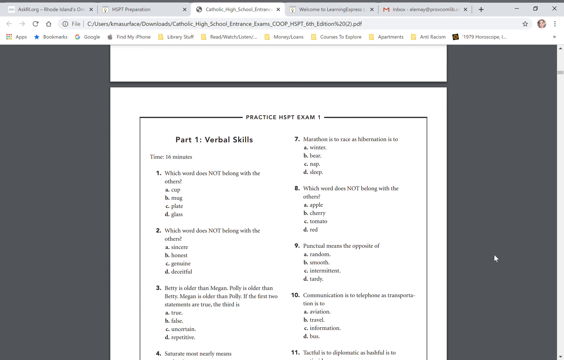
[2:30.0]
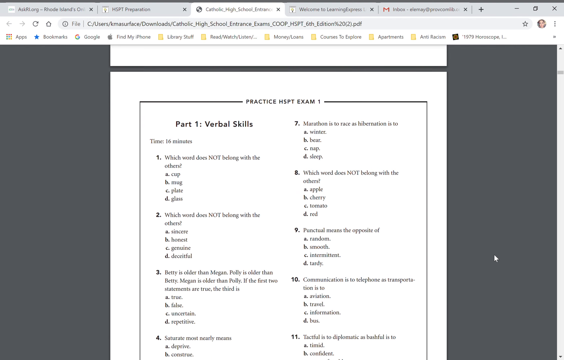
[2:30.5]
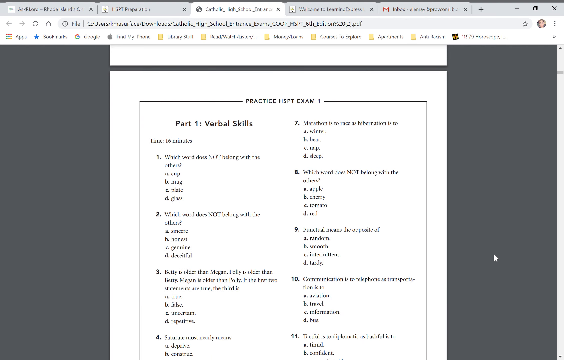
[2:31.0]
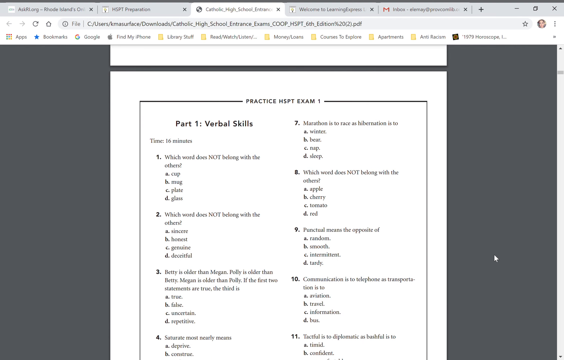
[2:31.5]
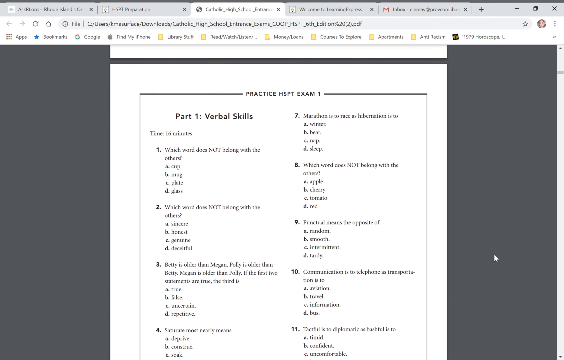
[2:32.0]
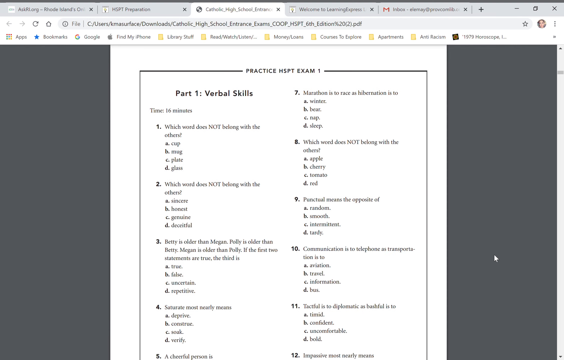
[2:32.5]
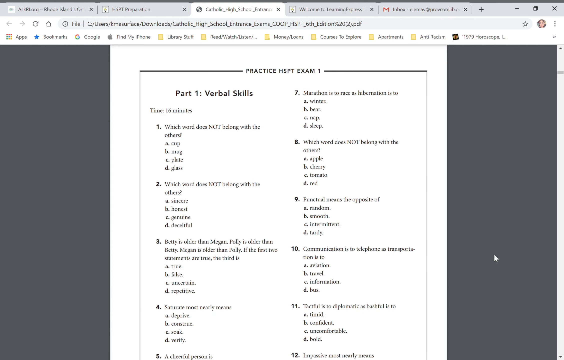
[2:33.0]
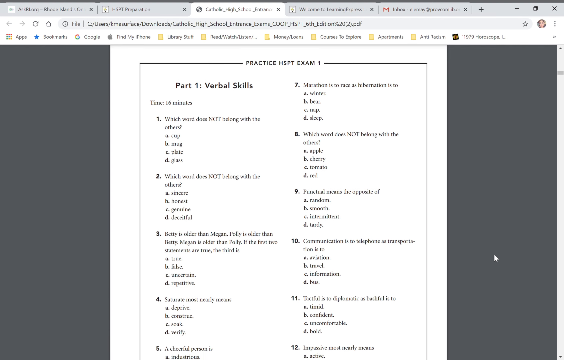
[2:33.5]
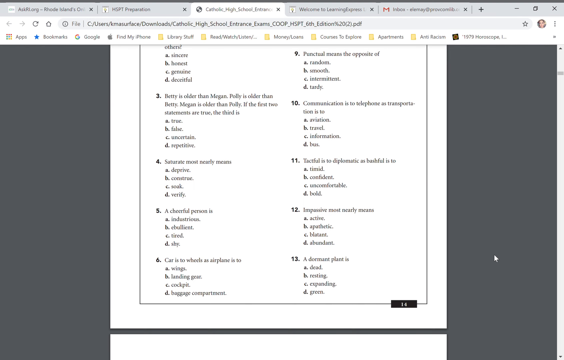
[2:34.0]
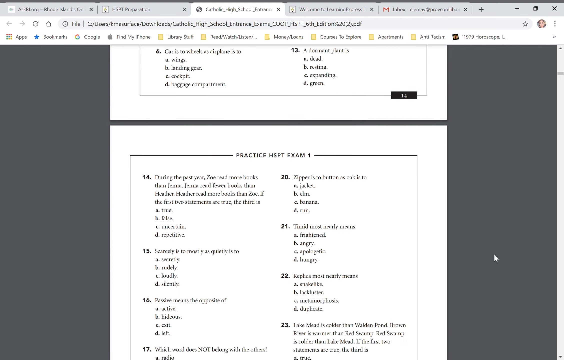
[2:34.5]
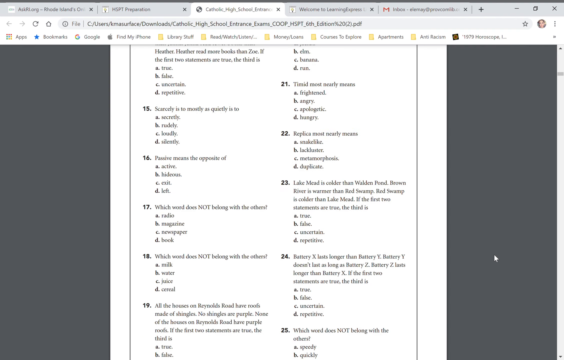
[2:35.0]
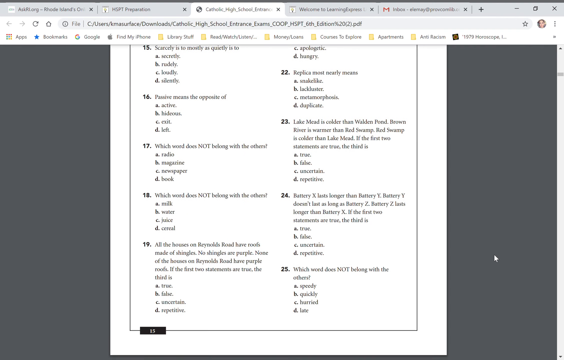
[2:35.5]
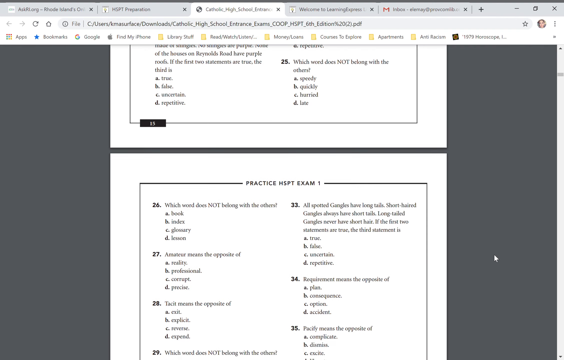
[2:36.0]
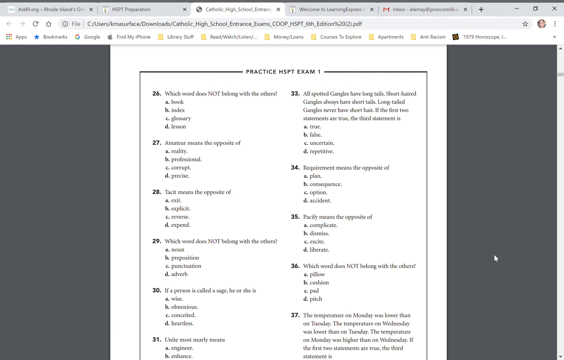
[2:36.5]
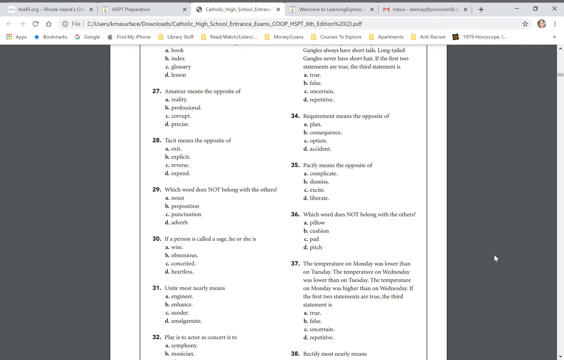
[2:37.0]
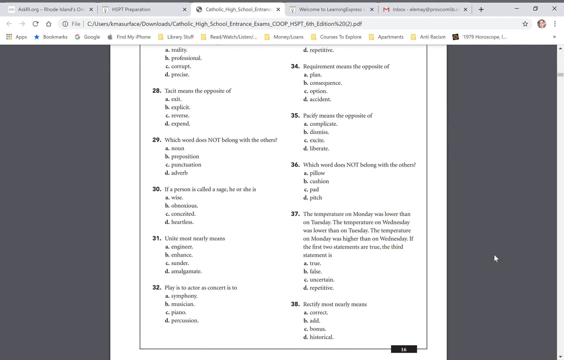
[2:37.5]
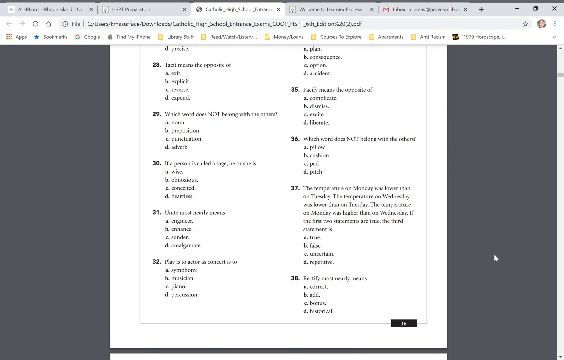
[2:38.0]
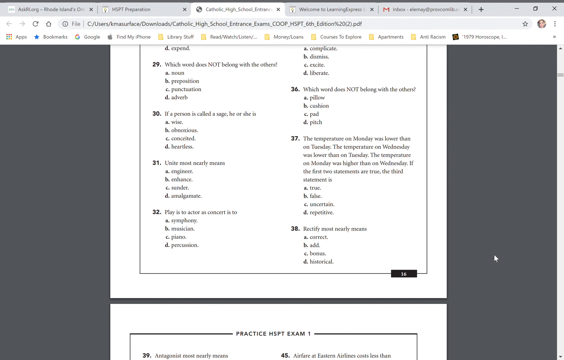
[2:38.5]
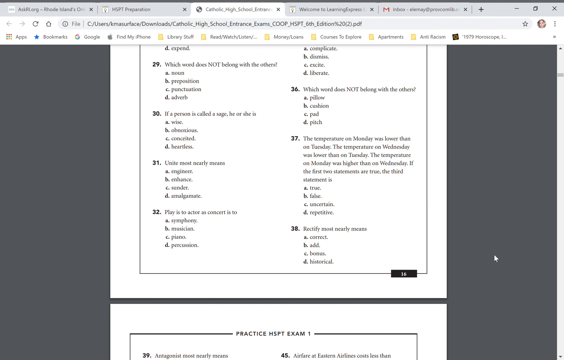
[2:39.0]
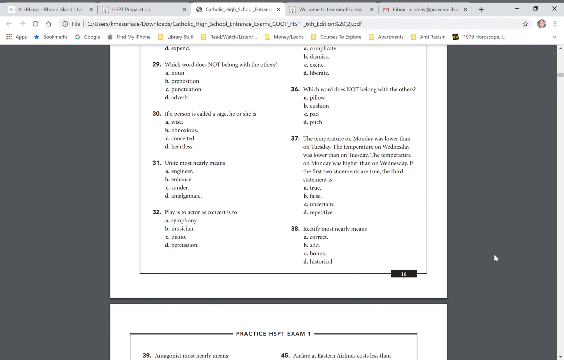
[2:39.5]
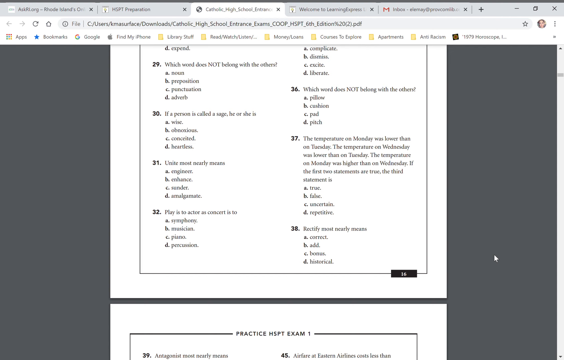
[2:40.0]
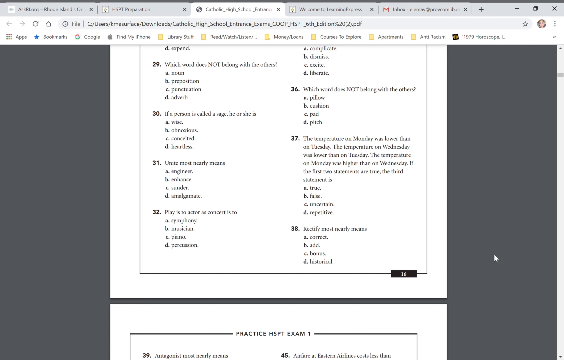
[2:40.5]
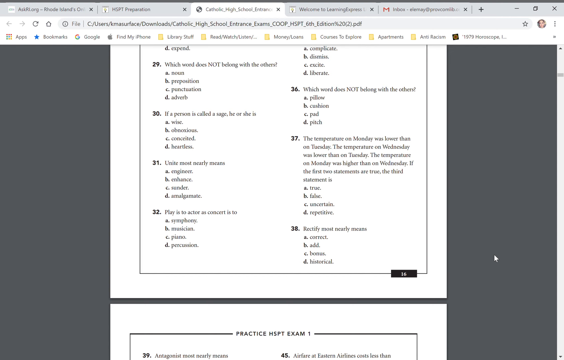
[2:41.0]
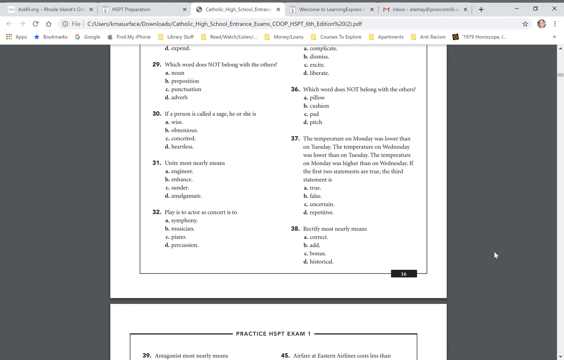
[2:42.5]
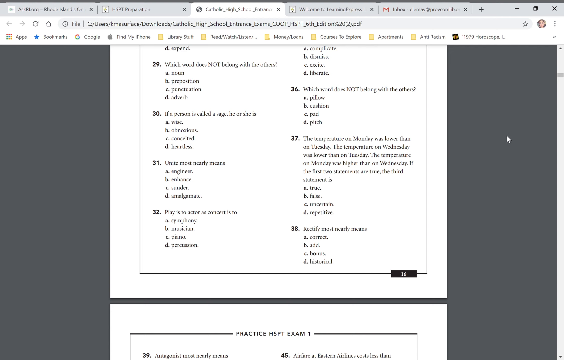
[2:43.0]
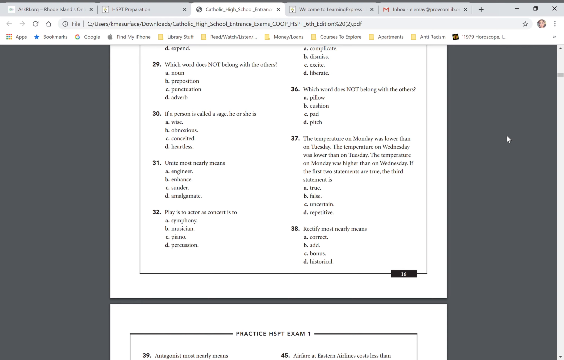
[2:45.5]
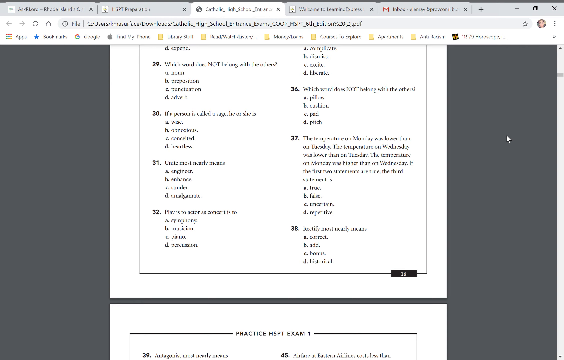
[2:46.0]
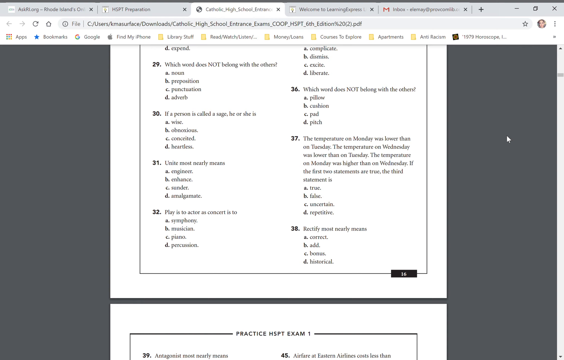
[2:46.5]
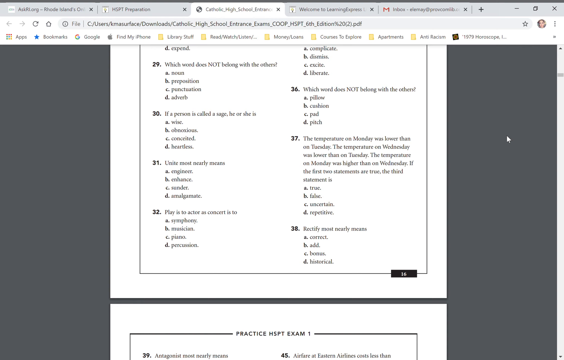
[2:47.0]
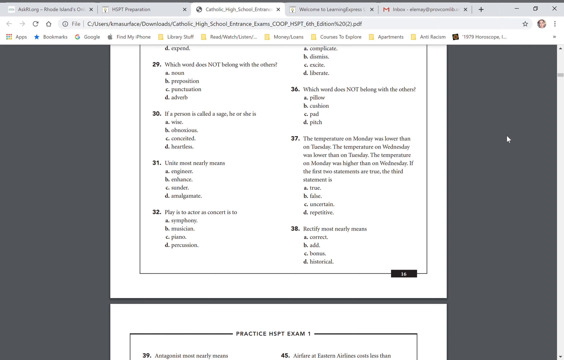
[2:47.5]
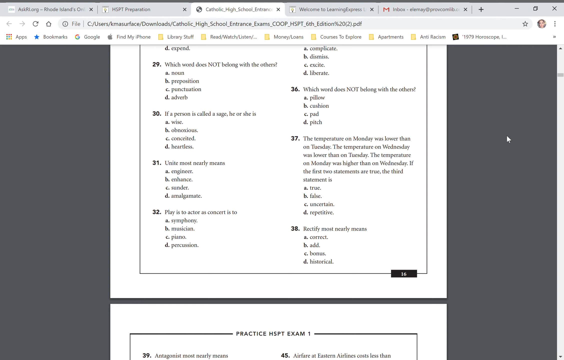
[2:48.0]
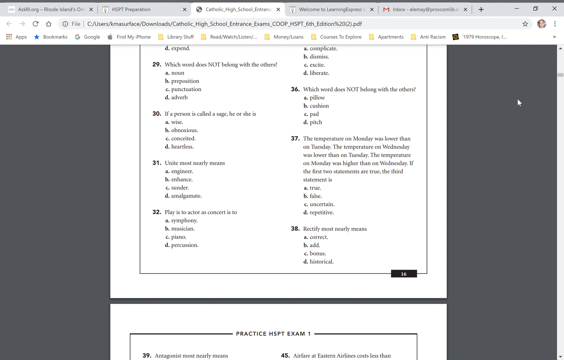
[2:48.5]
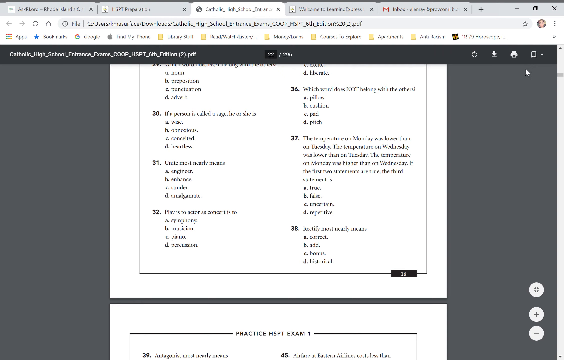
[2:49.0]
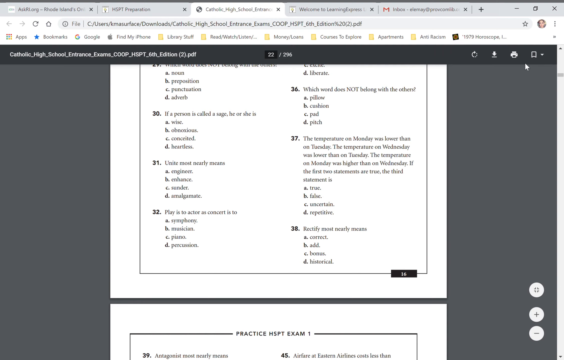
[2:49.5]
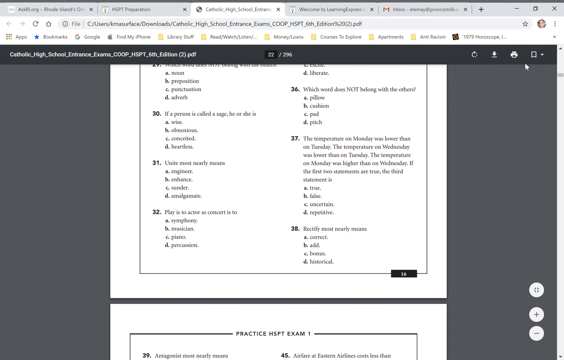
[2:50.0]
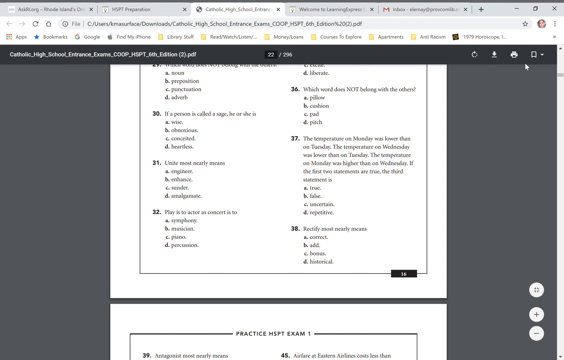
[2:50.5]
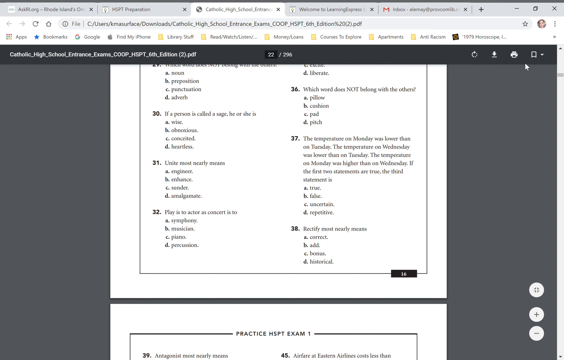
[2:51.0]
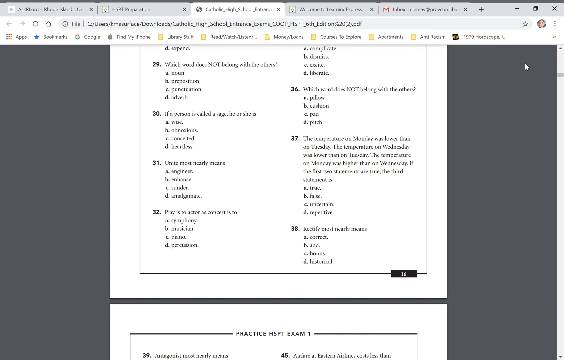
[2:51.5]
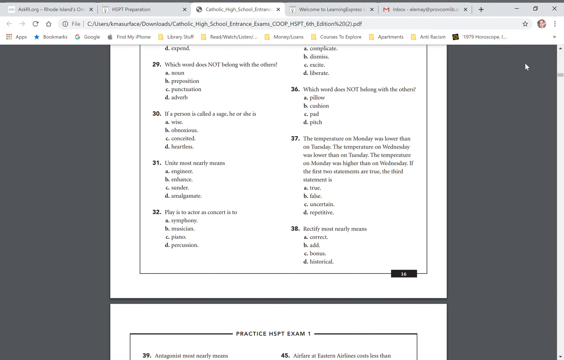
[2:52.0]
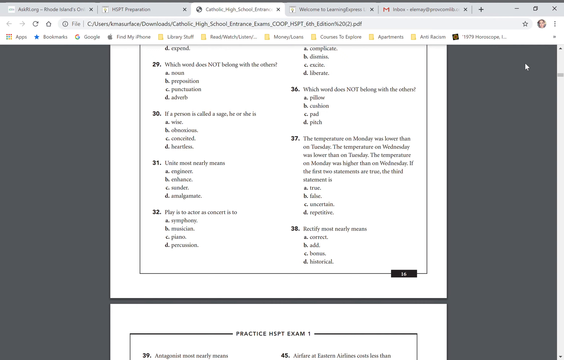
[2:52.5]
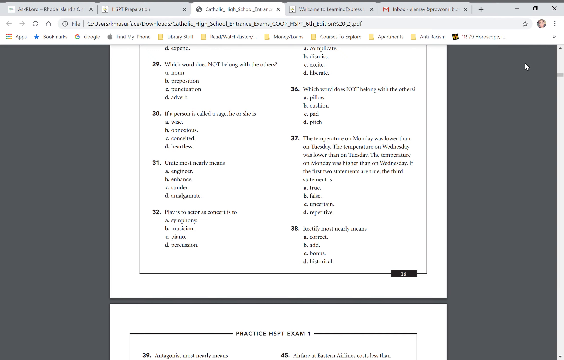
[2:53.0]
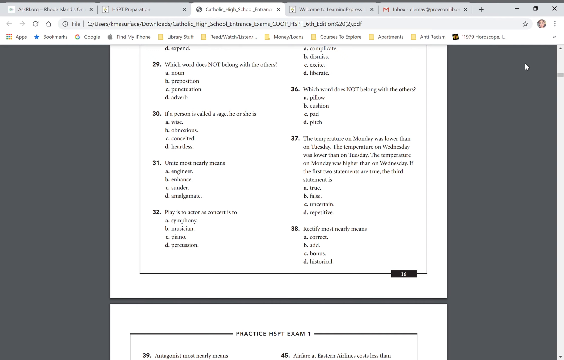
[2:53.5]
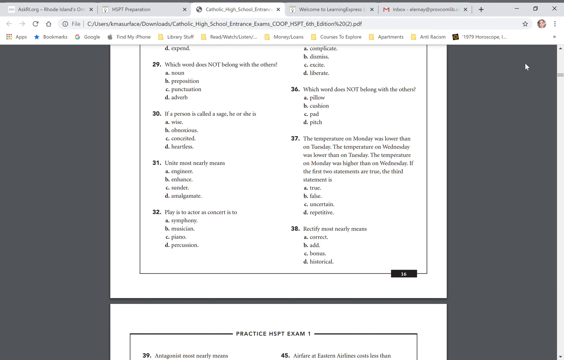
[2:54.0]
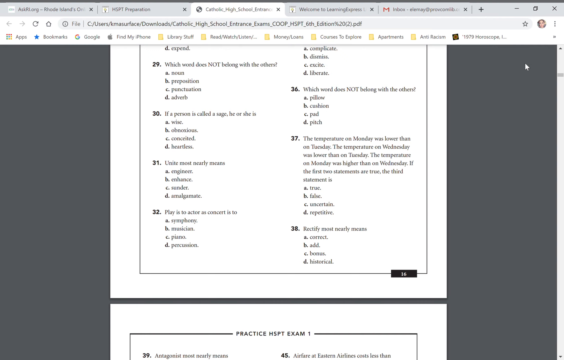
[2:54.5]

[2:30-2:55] The first page of the practice HSPT exam one has about 12 questions. The view quickly passes to the next page, which goes to question 25, and then to the next, which goes up to question 38. They are all short A, B, C, D multiple choice questions that seem relatively simple. The cursor seems to hover over the top right. The next page is part one, verbal skills. The verbal skills questions all seem relatively easy; most are one sentence long, with a few running to multiple sentences.